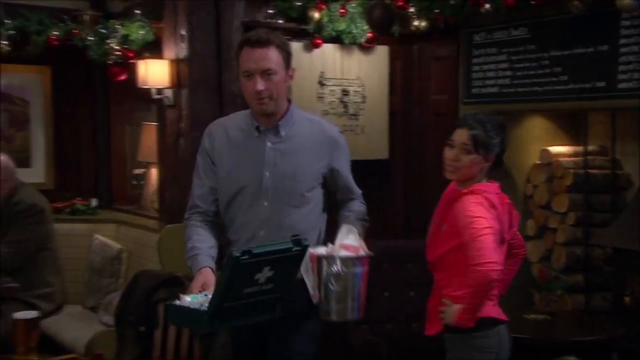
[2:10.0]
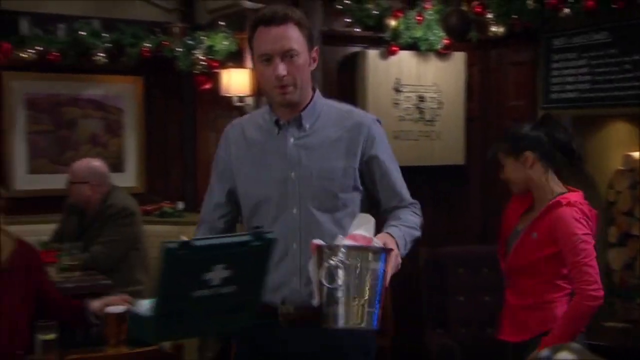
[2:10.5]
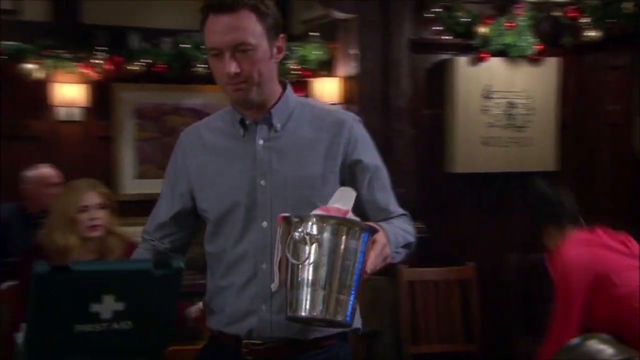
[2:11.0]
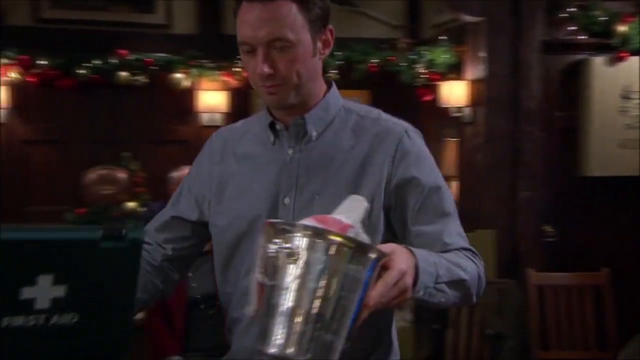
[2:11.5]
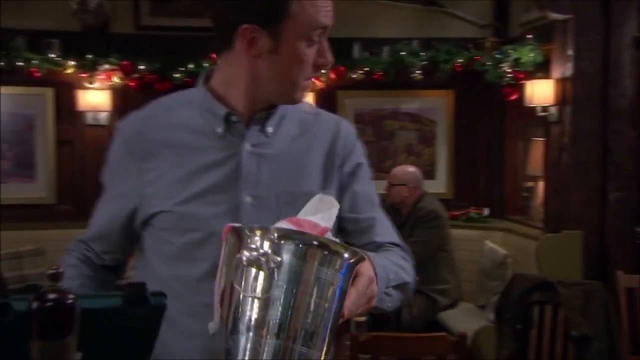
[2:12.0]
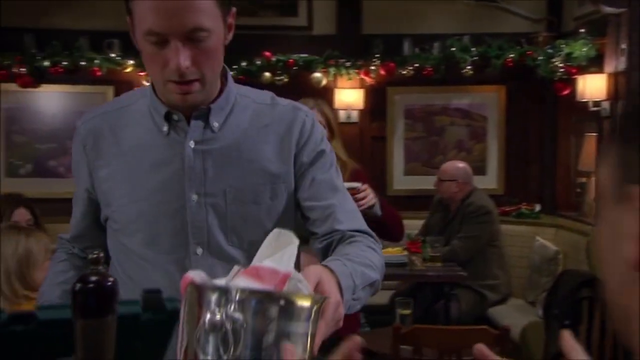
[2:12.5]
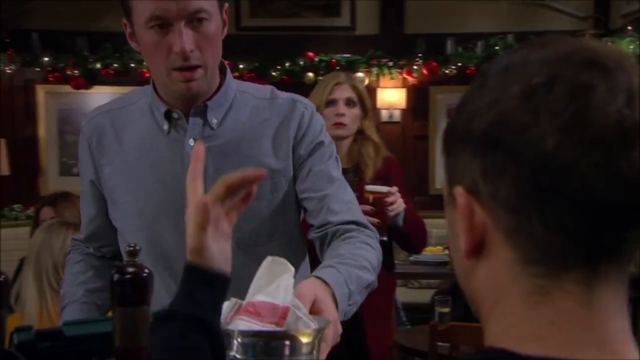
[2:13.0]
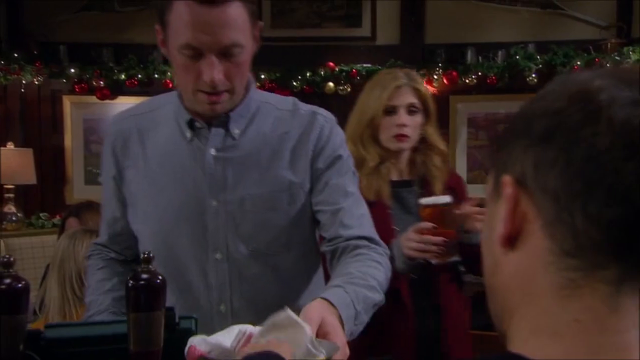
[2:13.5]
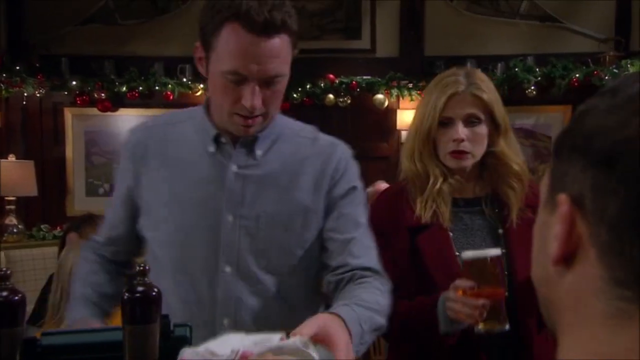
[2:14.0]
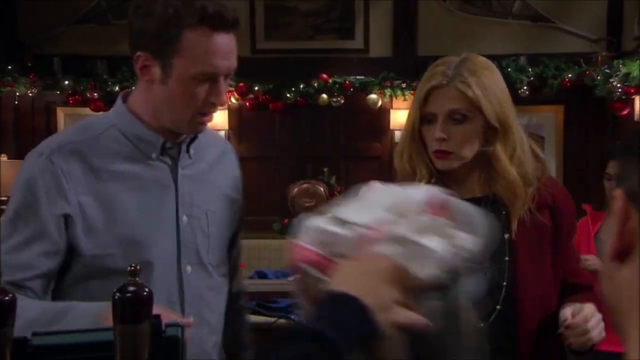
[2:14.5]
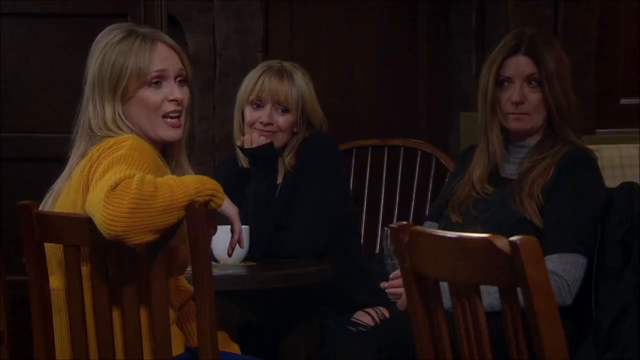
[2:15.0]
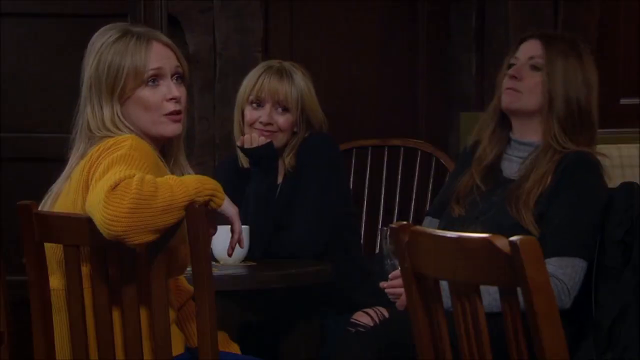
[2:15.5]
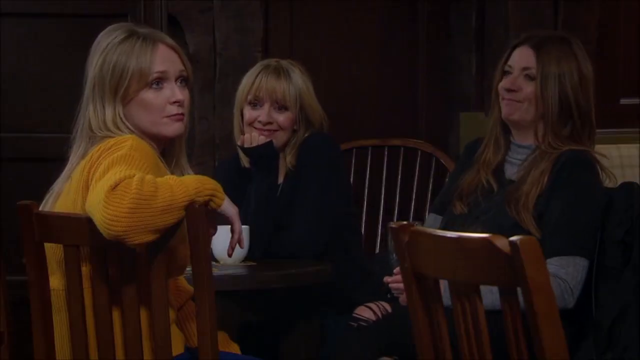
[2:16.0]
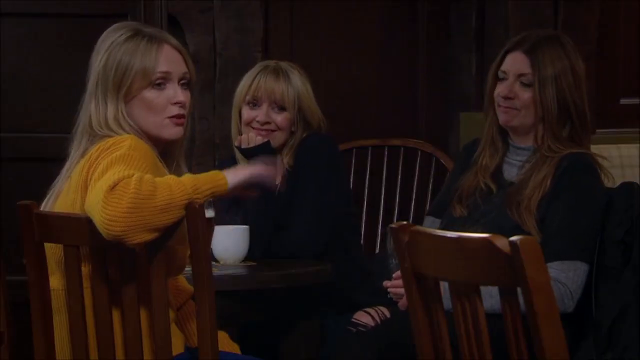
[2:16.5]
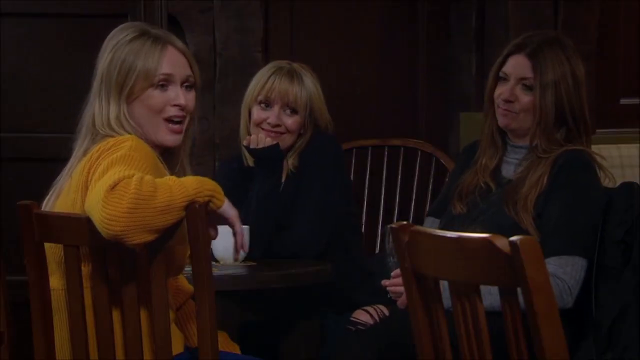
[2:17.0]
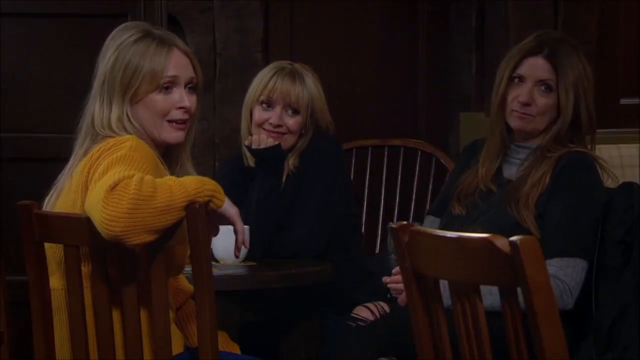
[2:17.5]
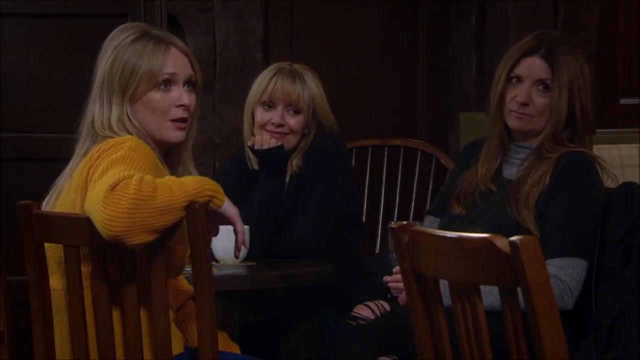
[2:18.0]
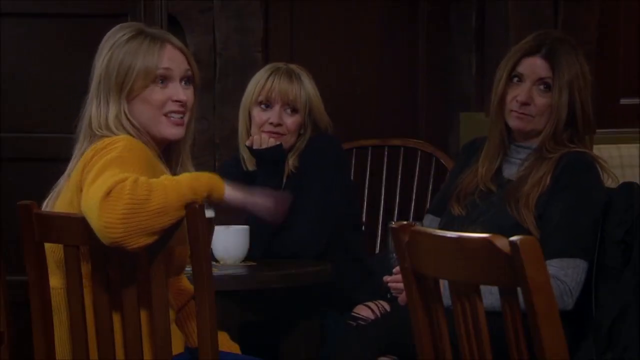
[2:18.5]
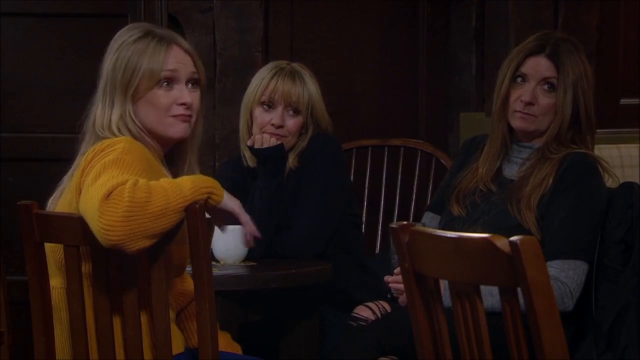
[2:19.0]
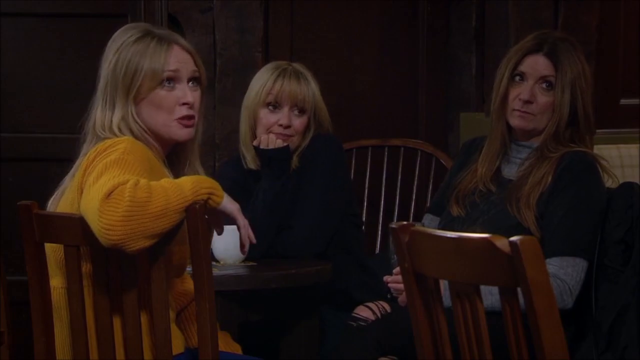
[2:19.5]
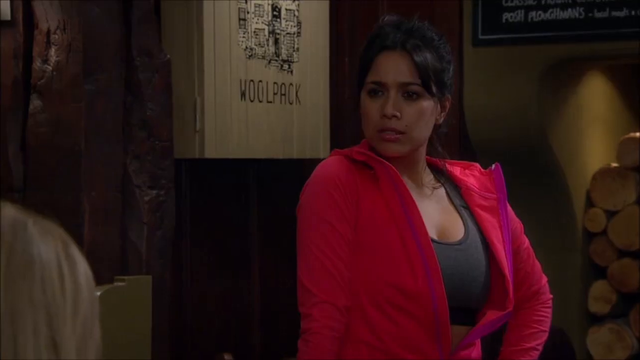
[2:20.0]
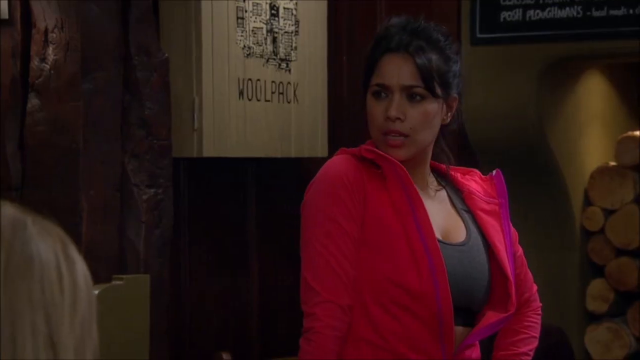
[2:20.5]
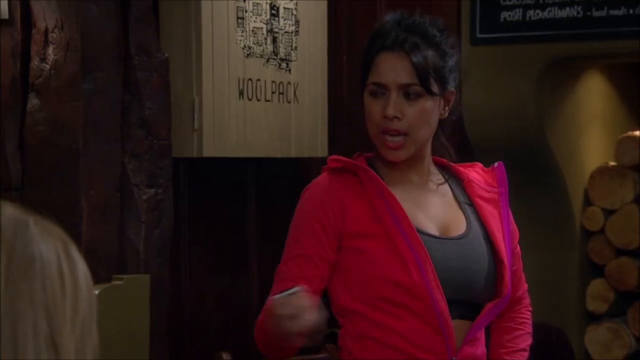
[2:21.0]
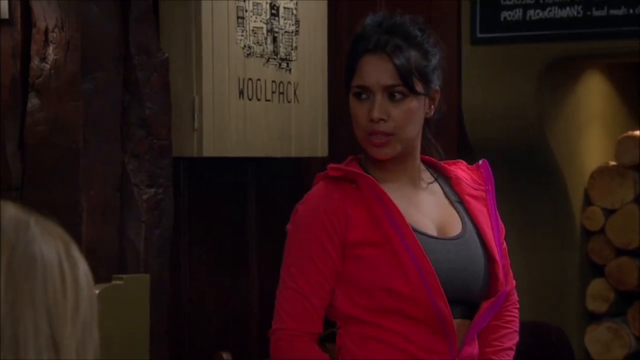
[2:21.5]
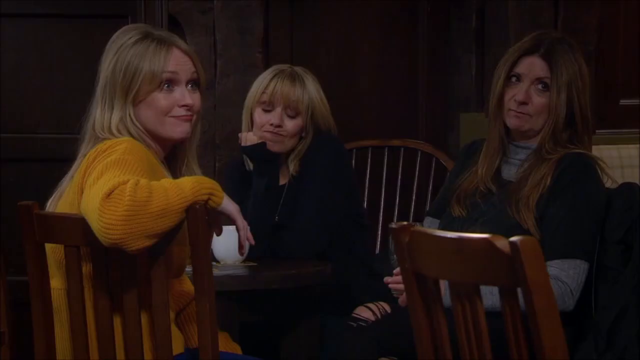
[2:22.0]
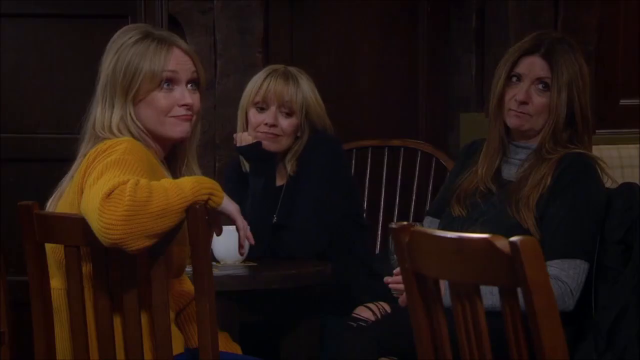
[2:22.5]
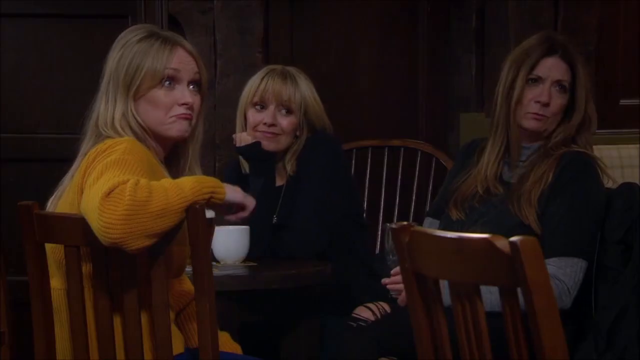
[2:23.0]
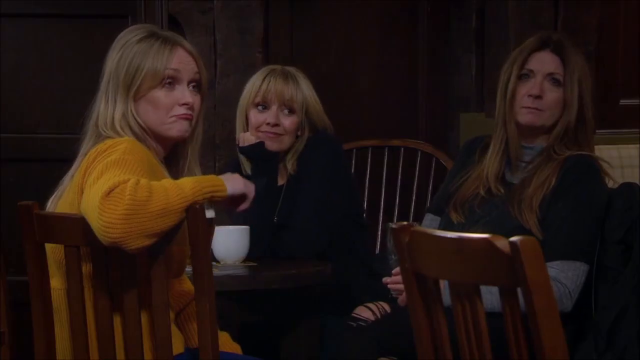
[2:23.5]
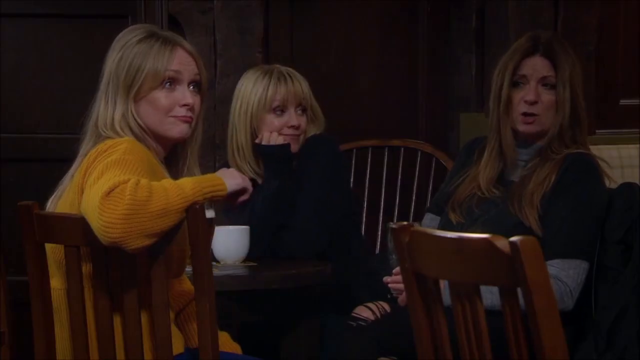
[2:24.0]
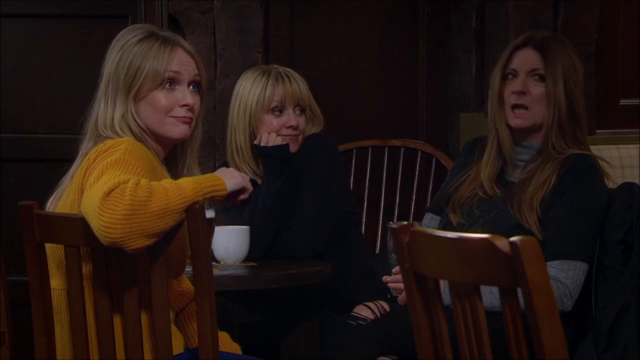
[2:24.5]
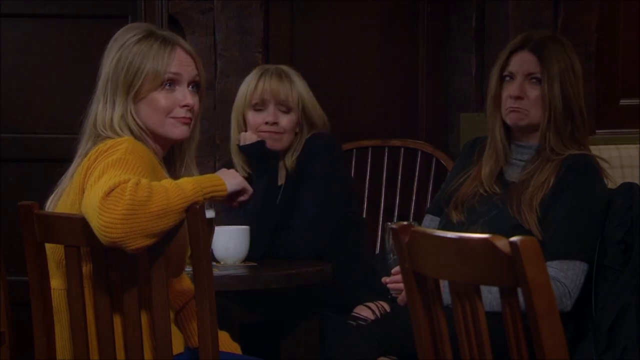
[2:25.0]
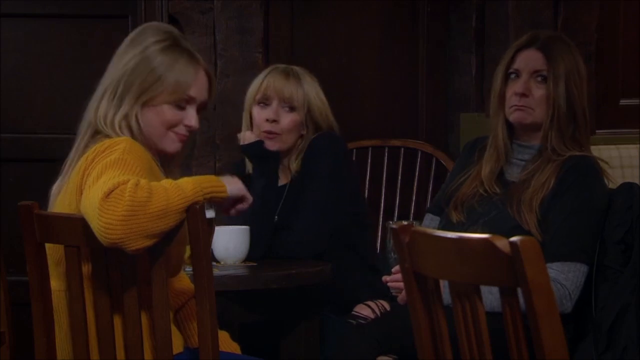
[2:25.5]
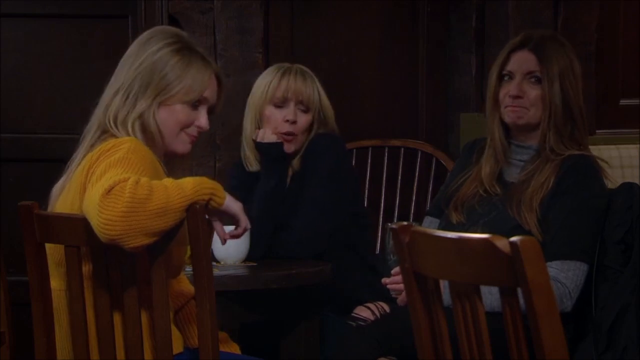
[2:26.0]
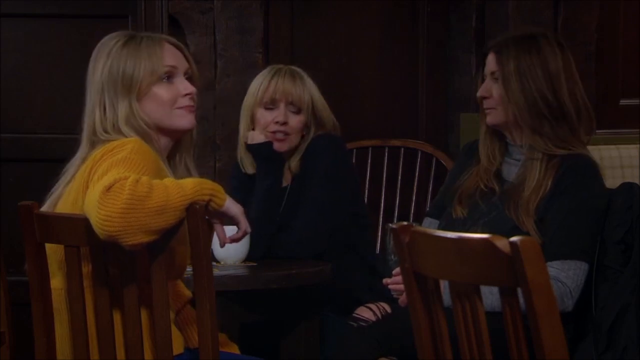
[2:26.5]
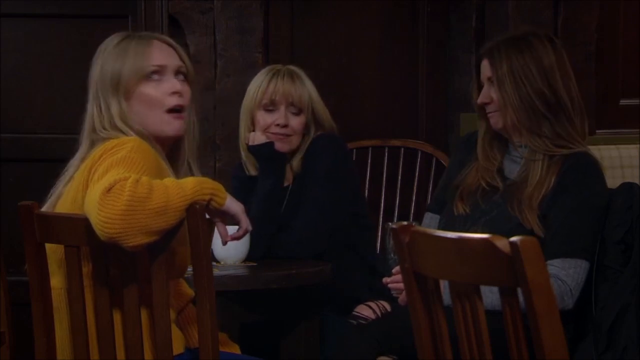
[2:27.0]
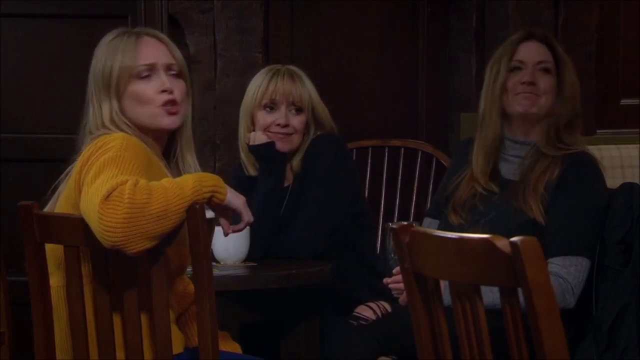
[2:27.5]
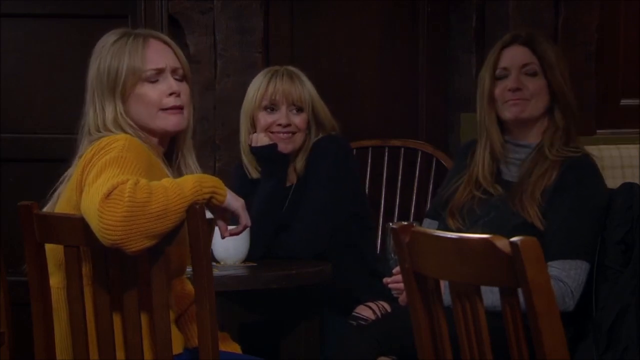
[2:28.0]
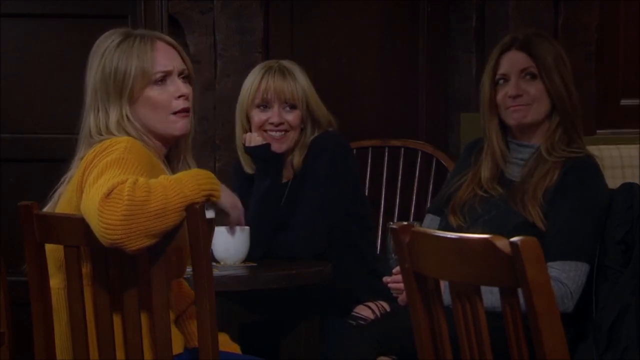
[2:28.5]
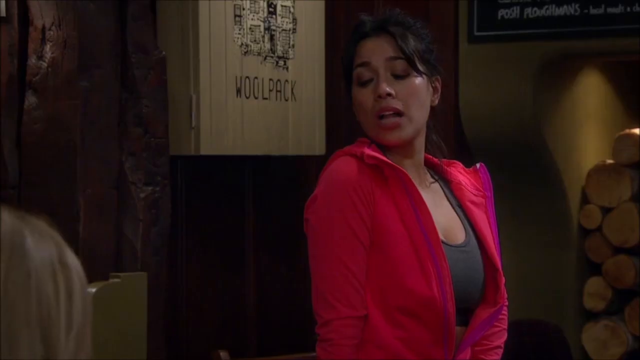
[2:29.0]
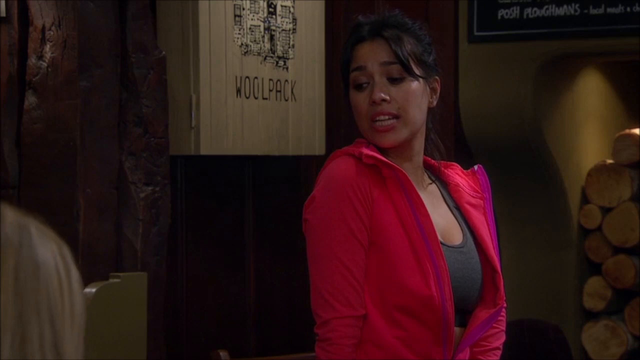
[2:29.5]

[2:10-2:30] The man picks up the first aid kit and the bucket of ice he got for the injured woman, walks them over to the bar, and drops them off with the bartender, while the injured woman watches. The blonde woman takes the undrunk drink and her own drink to the bar. The scene switches to the three ladies watching the situation, who are smirking and laughing. The lady with the long blonde hair and the yellow sweater makes snarky comments to the injured woman, who has walked over against the wall, closer to those ladies, and says things back to them with an attitude. The second lady, in the black and gray shirt, then says things to her; it does not seem like a friendly conversation. The injured woman doesn't seem to care. Characters in the background don't seem to be engaging with any of it.